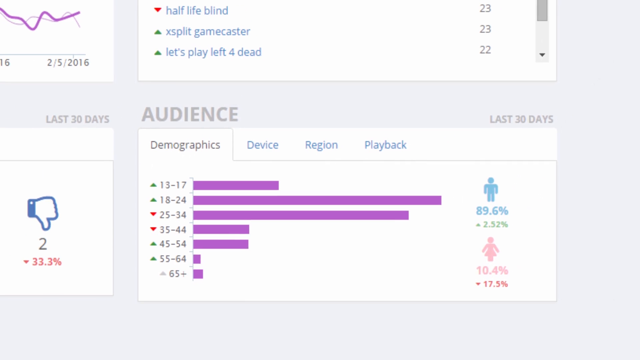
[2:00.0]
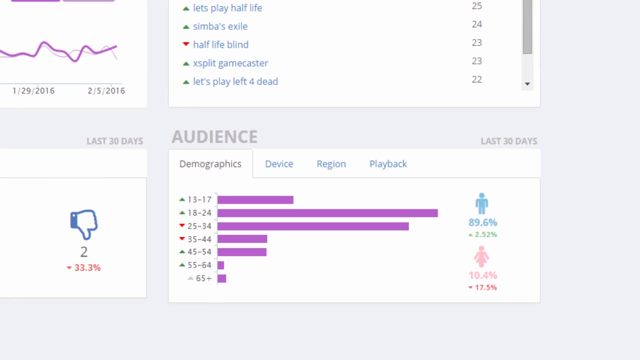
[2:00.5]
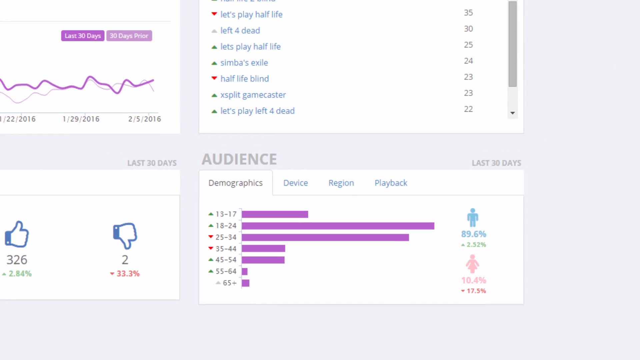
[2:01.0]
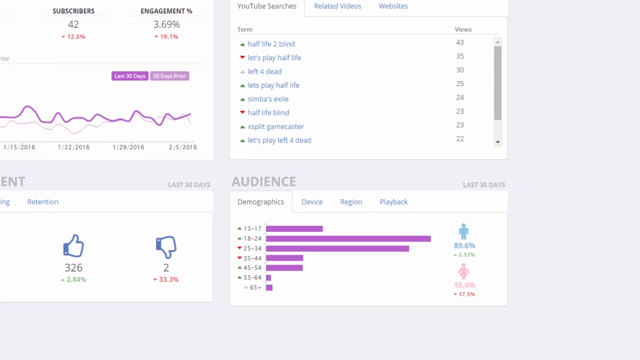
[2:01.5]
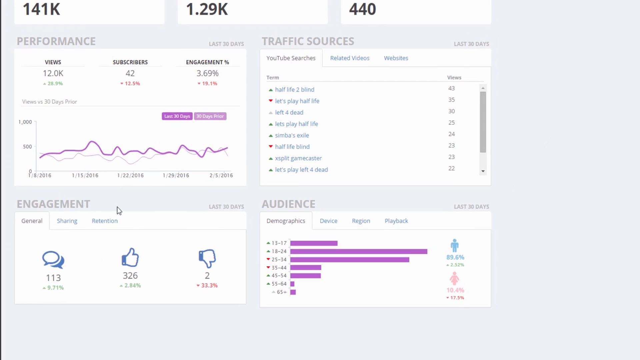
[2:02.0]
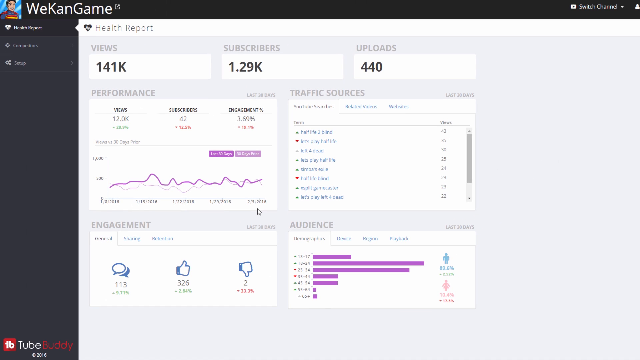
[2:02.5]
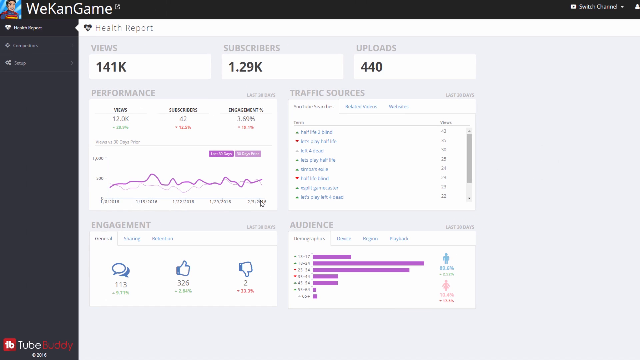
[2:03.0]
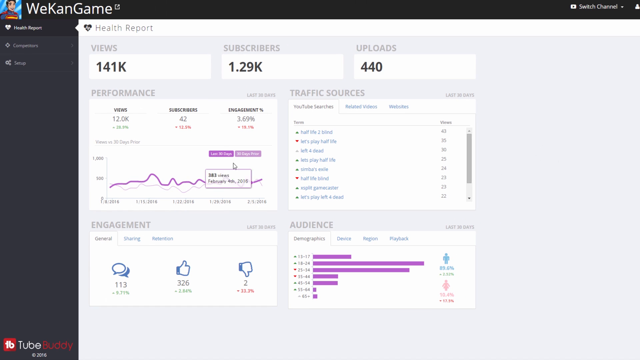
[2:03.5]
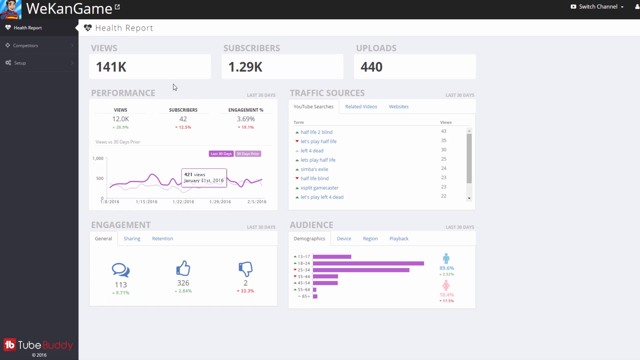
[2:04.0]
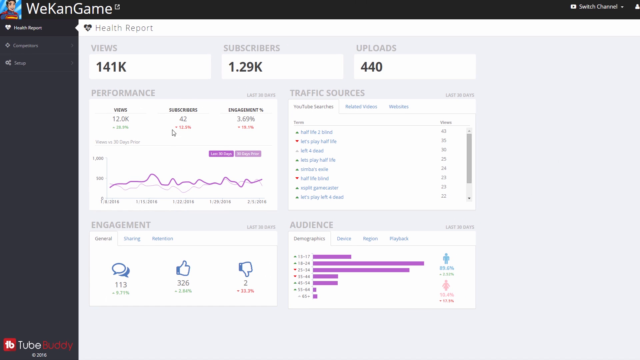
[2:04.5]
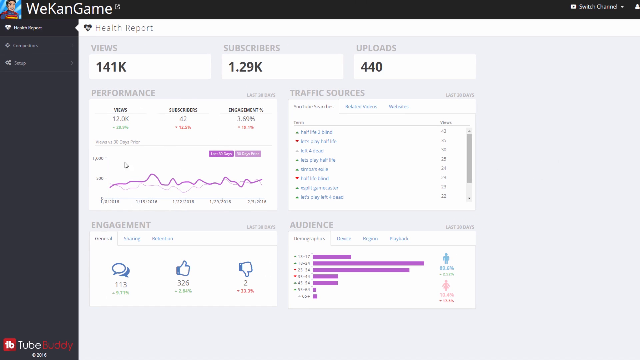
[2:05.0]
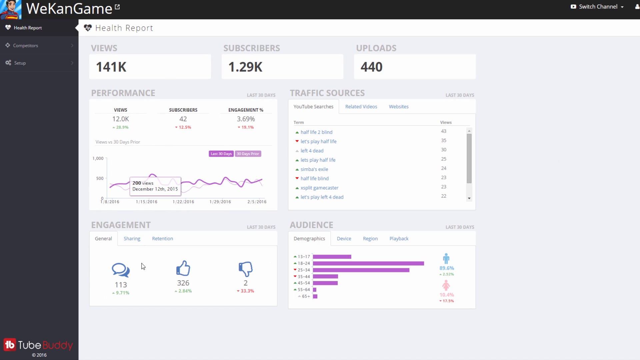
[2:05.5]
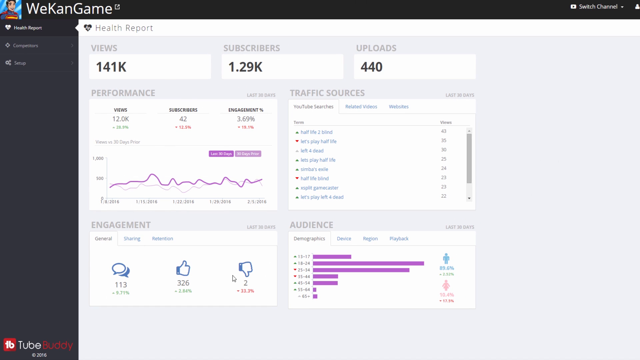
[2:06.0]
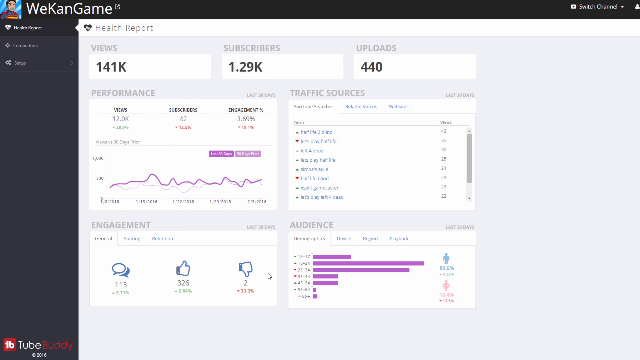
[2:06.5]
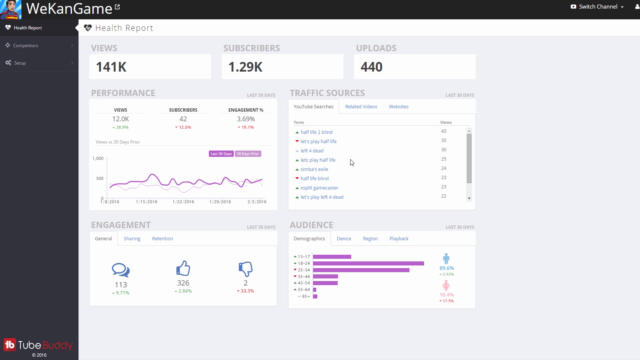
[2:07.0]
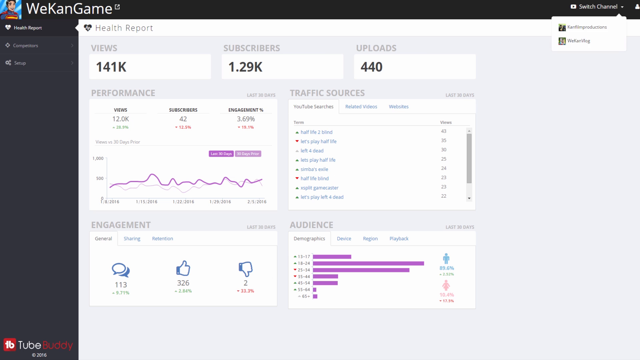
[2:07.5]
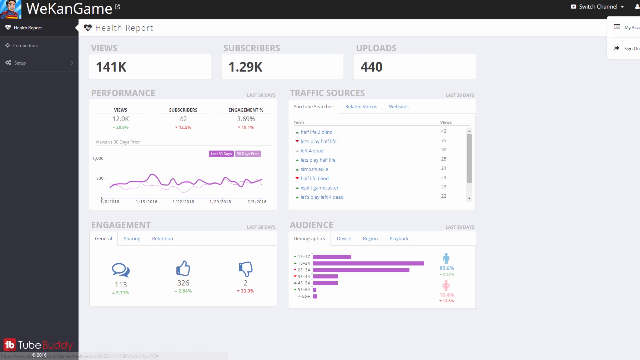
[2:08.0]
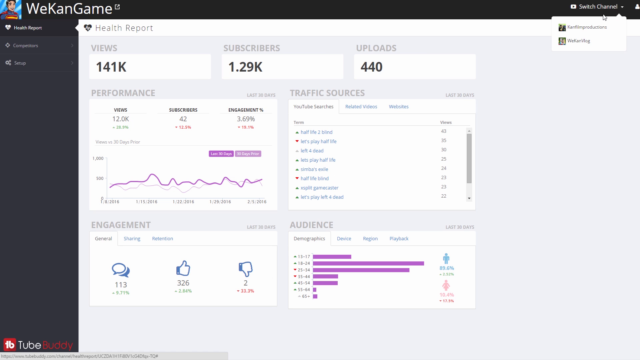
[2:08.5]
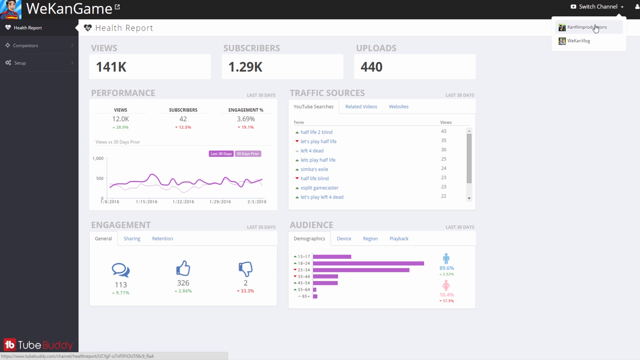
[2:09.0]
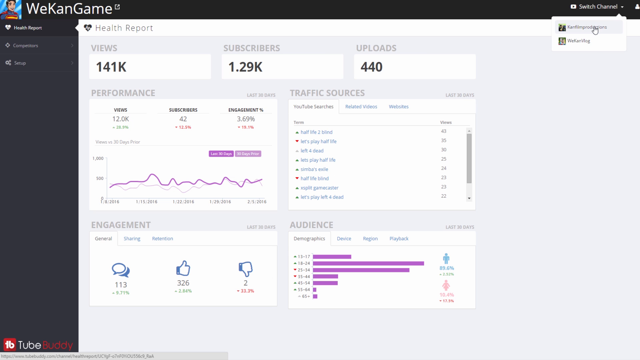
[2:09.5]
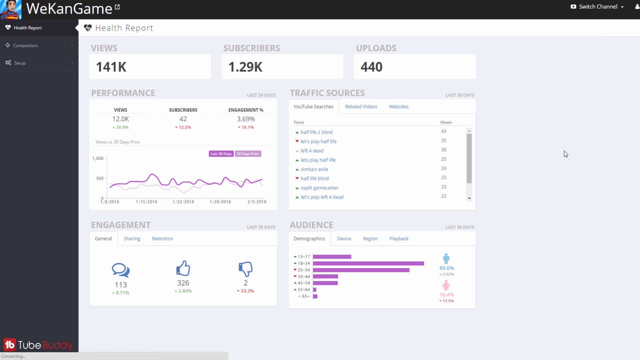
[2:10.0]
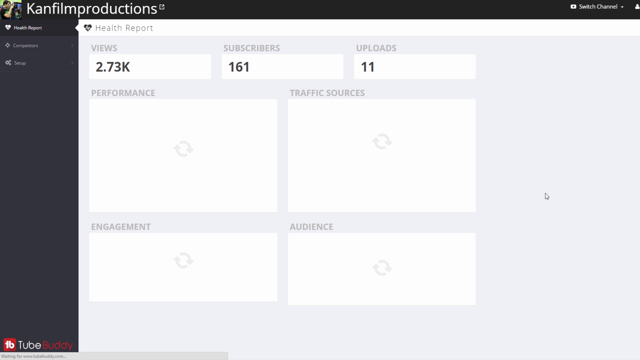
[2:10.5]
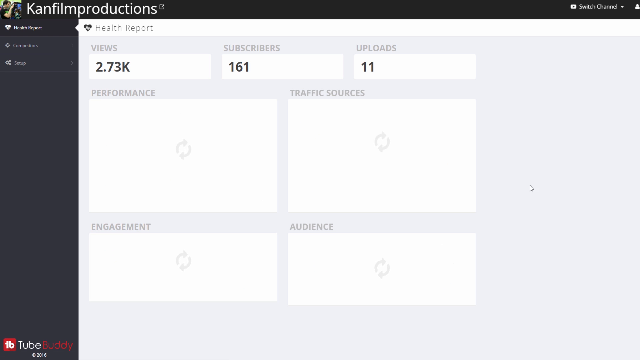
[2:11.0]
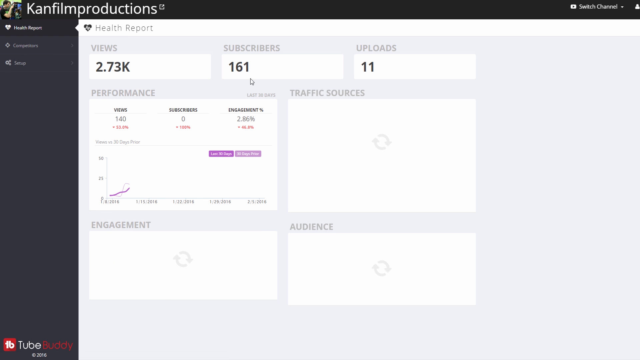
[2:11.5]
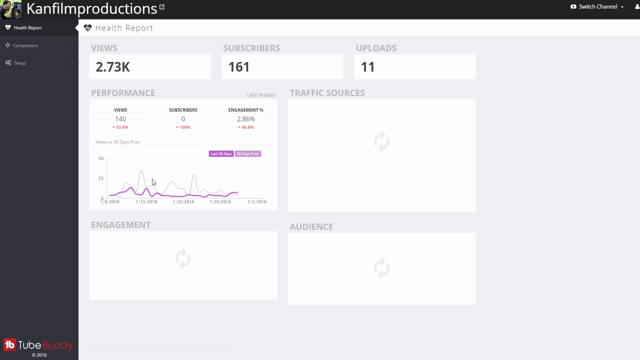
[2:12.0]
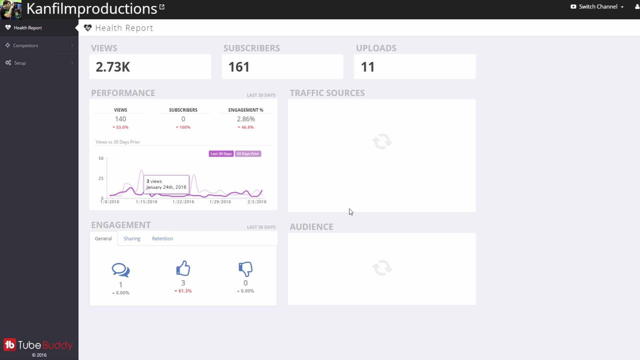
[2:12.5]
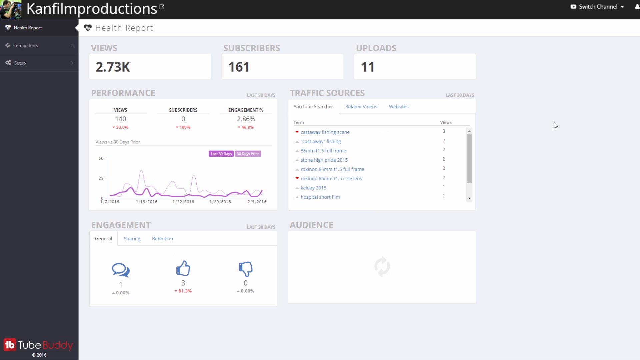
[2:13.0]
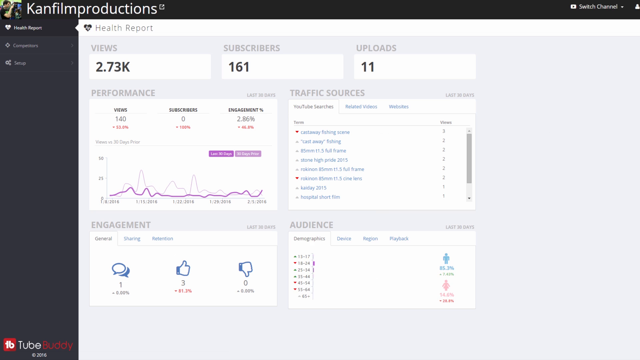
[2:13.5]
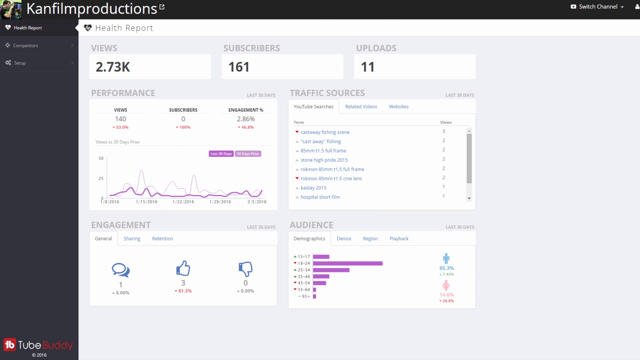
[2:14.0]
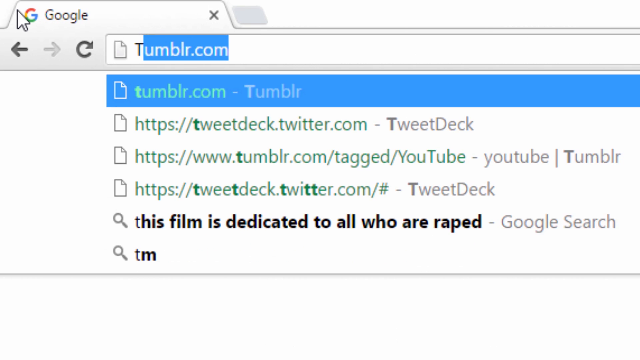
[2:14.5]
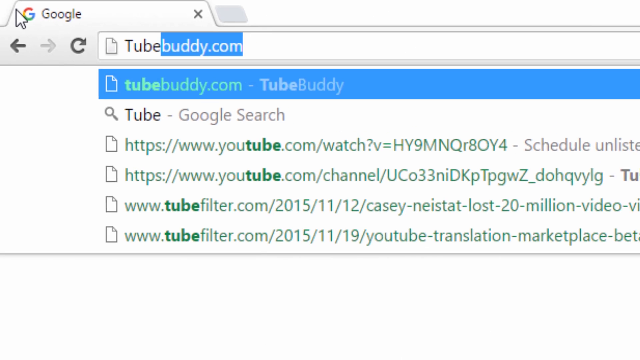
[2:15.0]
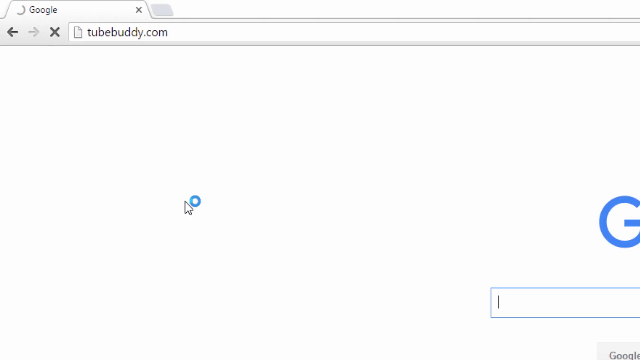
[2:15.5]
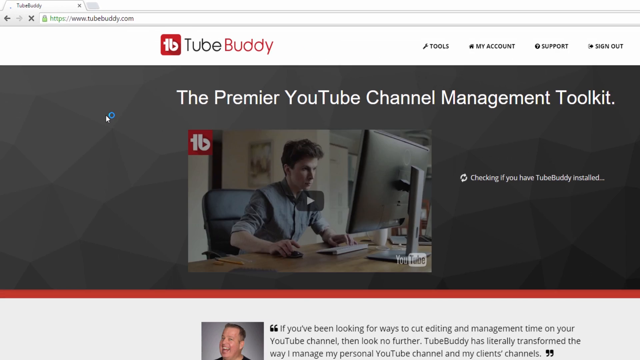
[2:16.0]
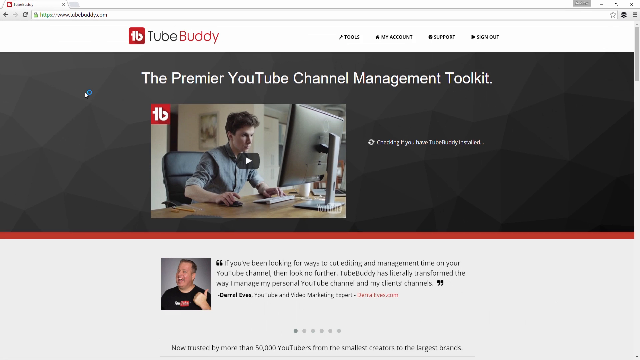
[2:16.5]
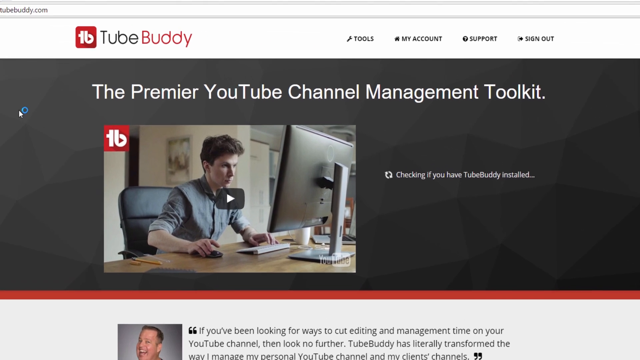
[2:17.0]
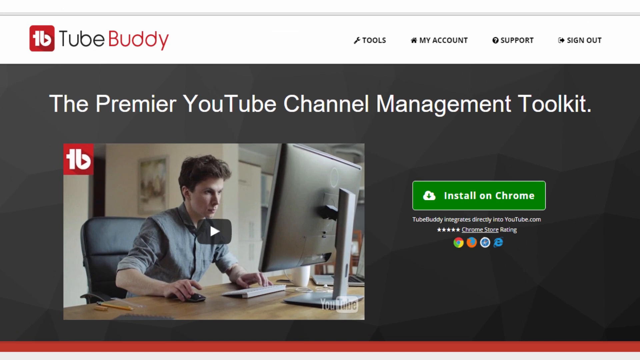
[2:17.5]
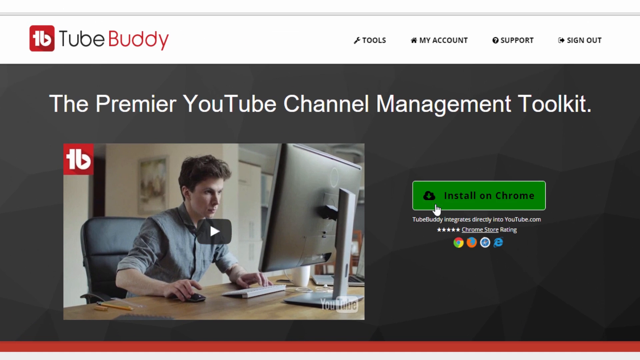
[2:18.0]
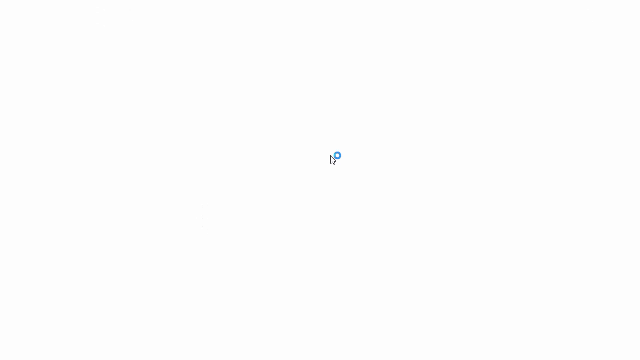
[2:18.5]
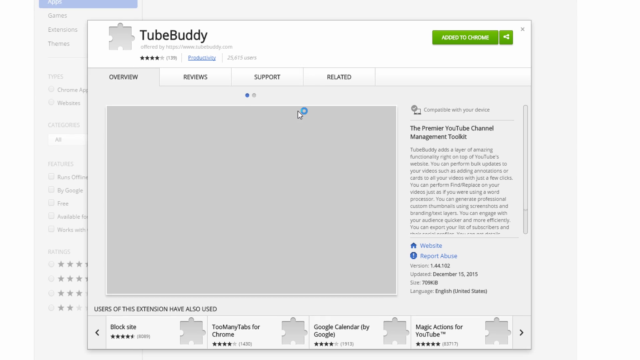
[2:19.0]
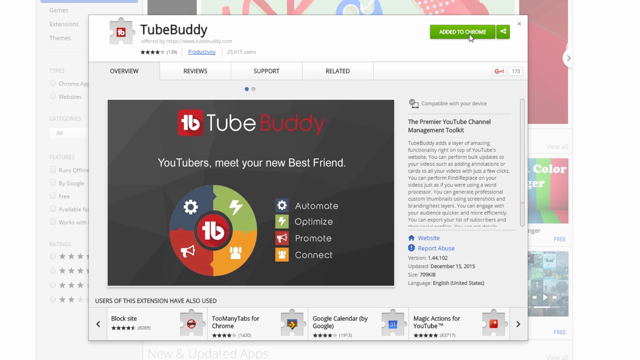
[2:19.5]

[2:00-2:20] The view focuses on the audience section of the profile, which shows 89.6% men and 10.4% women, then zooms out to reveal the rest of the page: views, subscribers, uploads, performance, traffic sources and engagement, an overall health report of the YouTube channel We Can Game. The person goes to the top right, to "switch channel", and switches to a channel called "can film productions", which shows 2.73 thousand views, 161 subscribers and 11 uploads. The screen then changes to a Google Chrome web browser showing TubeBuddy.com, with text including "YouTube channel management toolkit", "tools", "my account", "support", "sign out" and "checking if you have compatibility". The person clicks to download the TubeBuddy application, and a page pops up showing "added to Chrome".